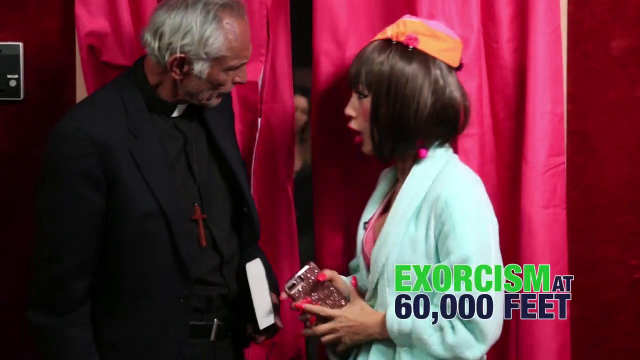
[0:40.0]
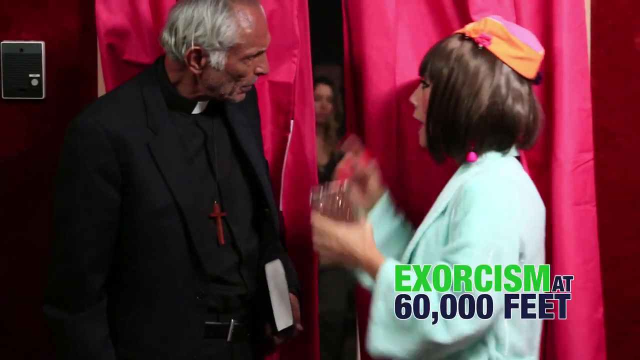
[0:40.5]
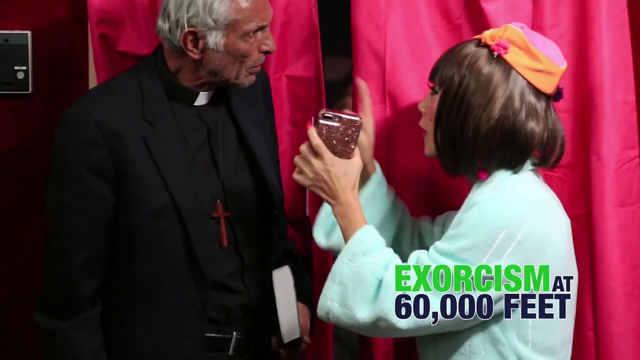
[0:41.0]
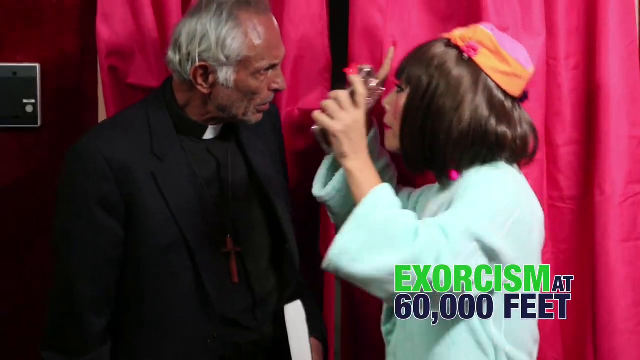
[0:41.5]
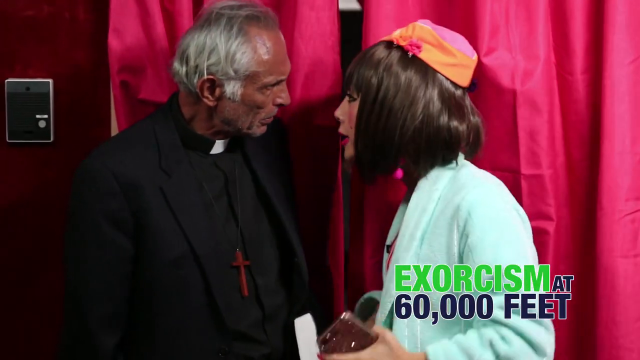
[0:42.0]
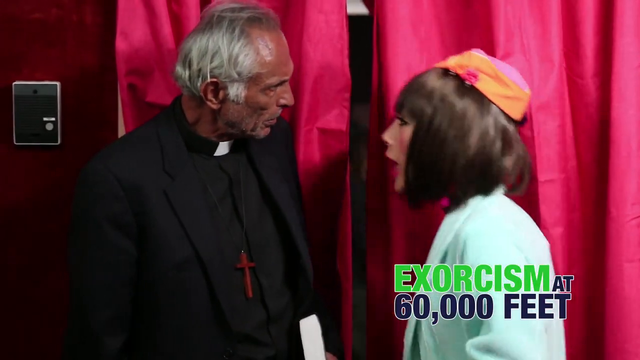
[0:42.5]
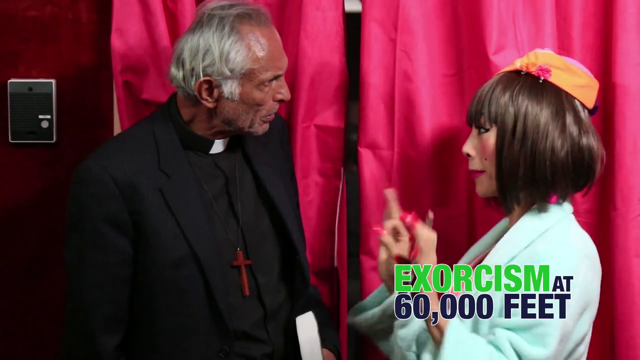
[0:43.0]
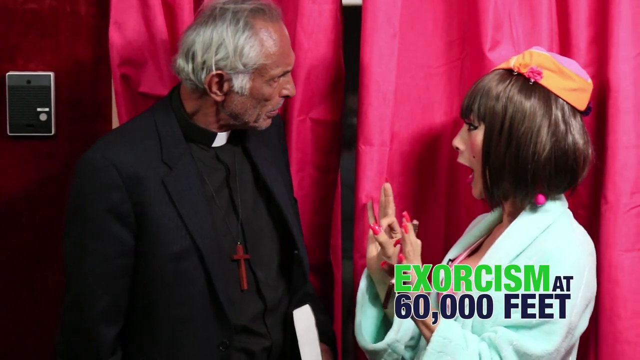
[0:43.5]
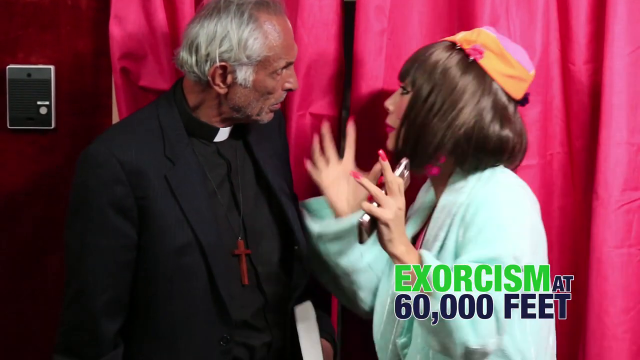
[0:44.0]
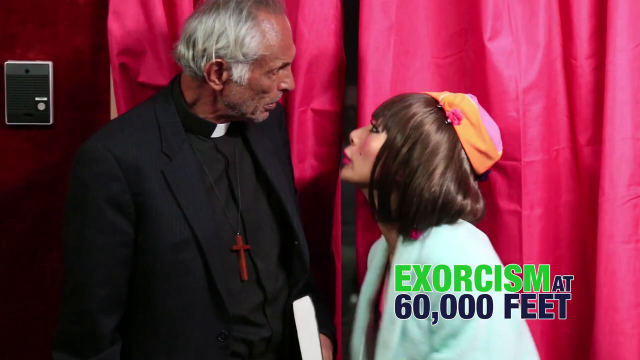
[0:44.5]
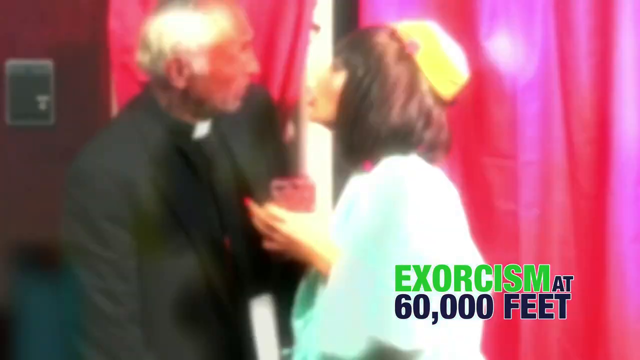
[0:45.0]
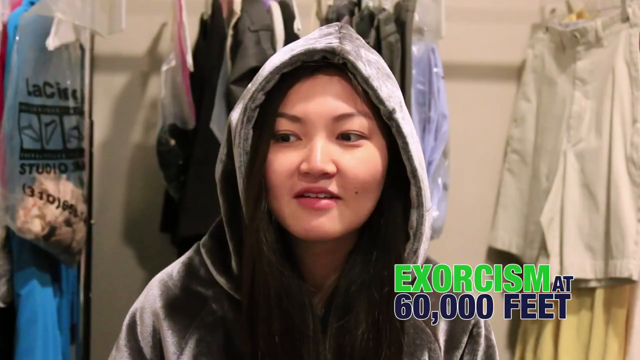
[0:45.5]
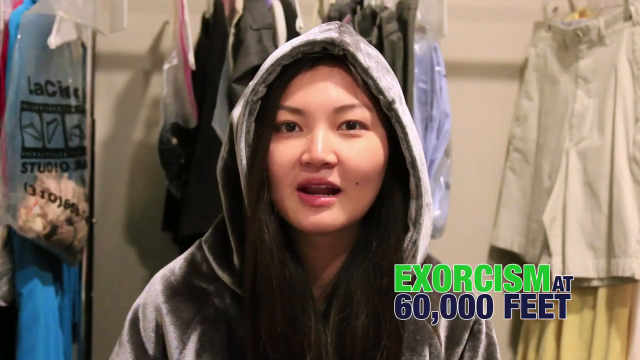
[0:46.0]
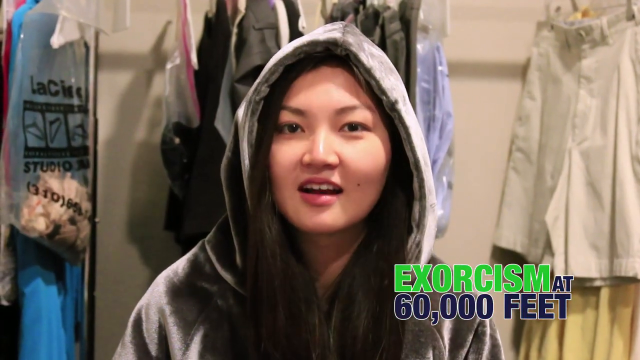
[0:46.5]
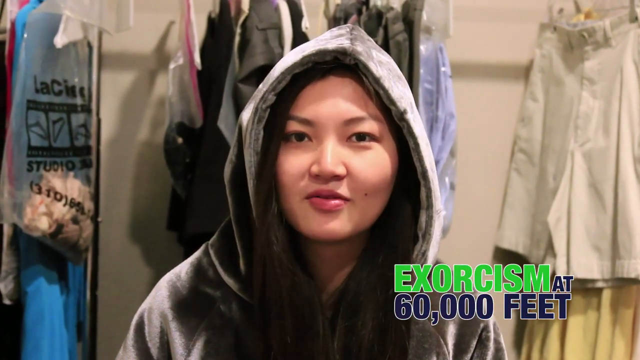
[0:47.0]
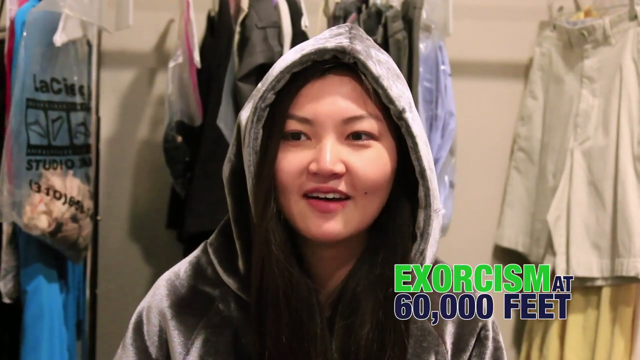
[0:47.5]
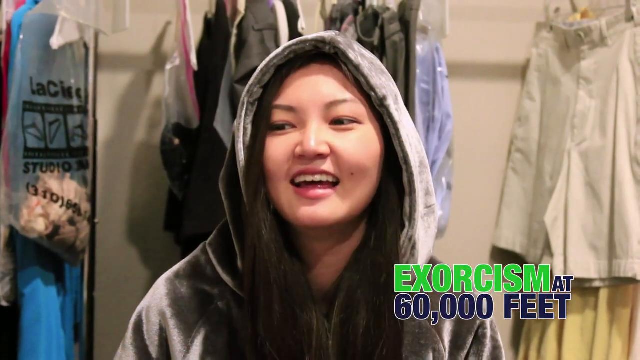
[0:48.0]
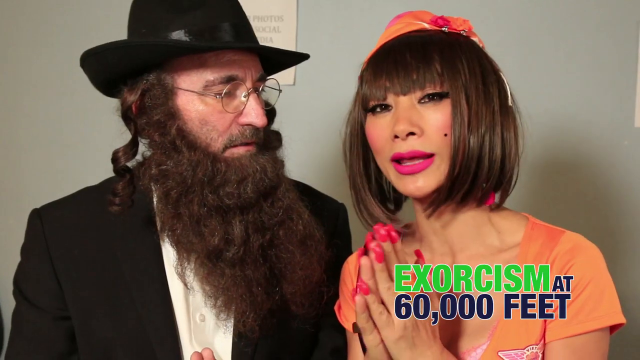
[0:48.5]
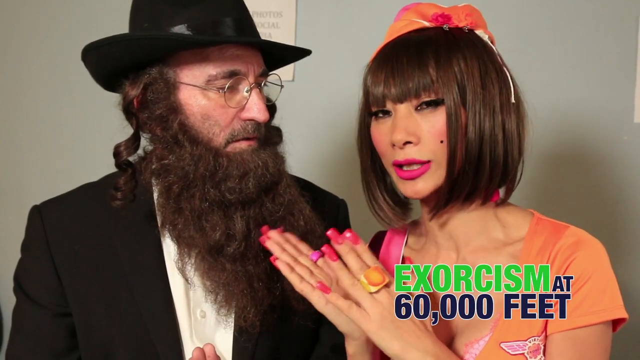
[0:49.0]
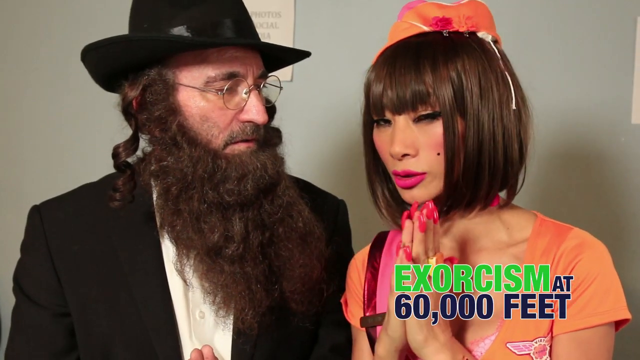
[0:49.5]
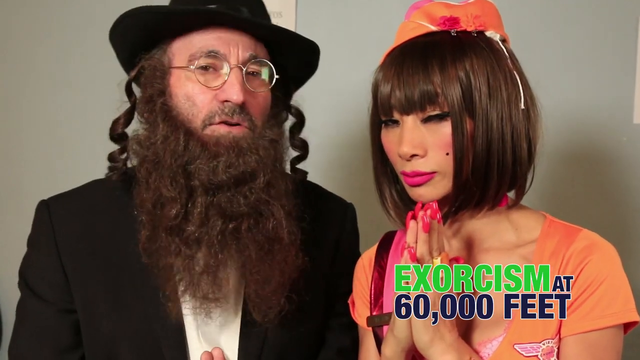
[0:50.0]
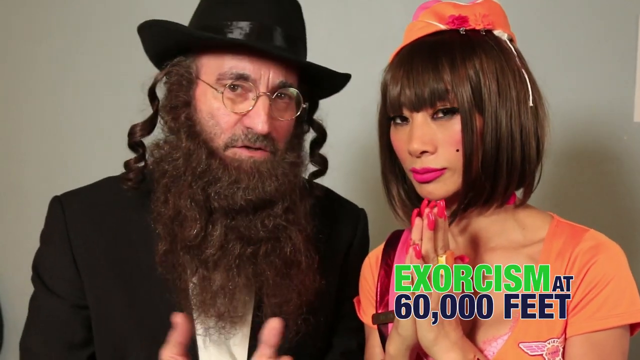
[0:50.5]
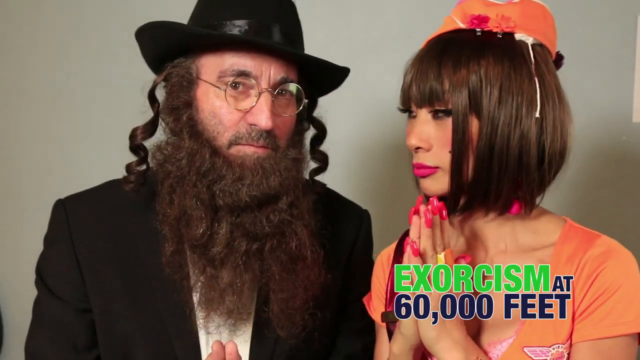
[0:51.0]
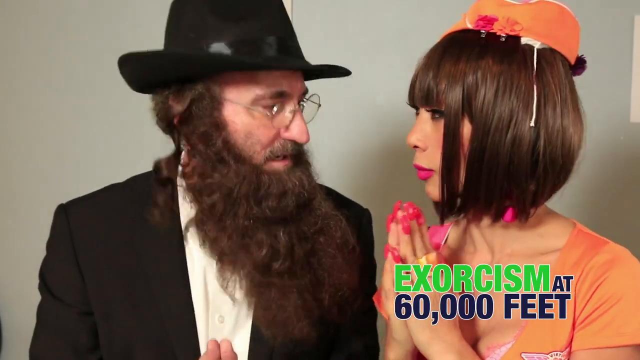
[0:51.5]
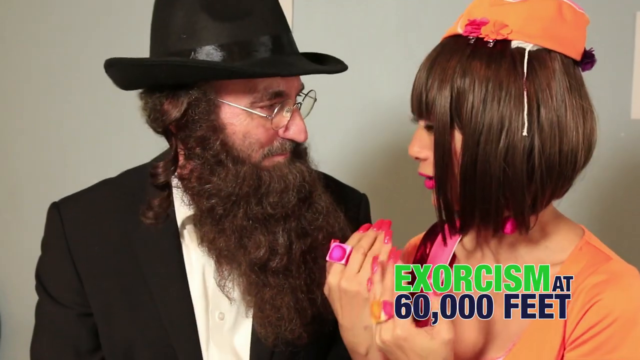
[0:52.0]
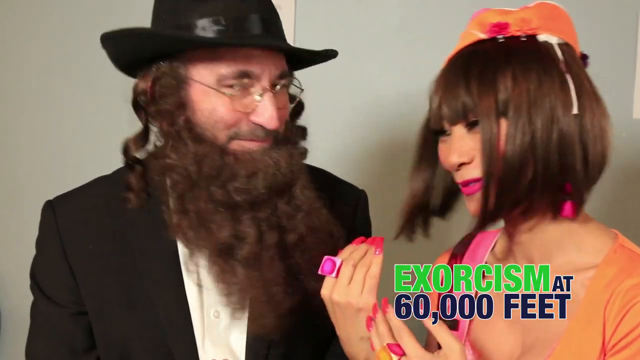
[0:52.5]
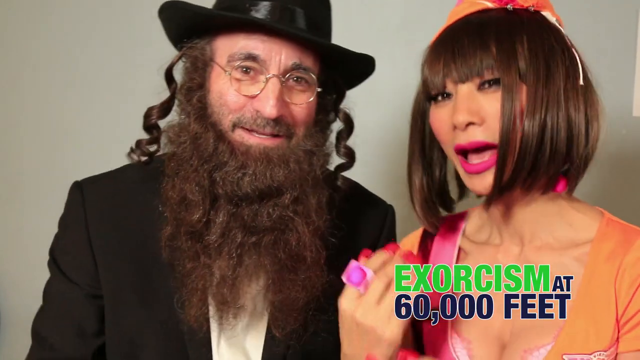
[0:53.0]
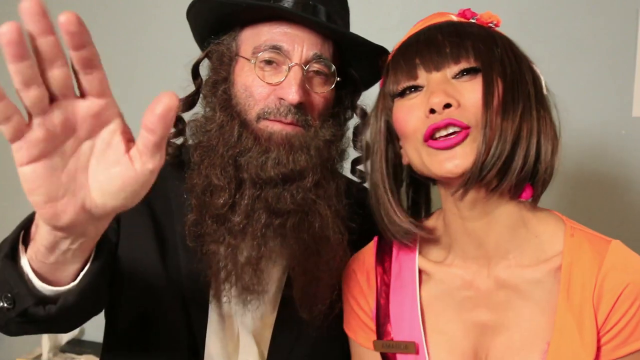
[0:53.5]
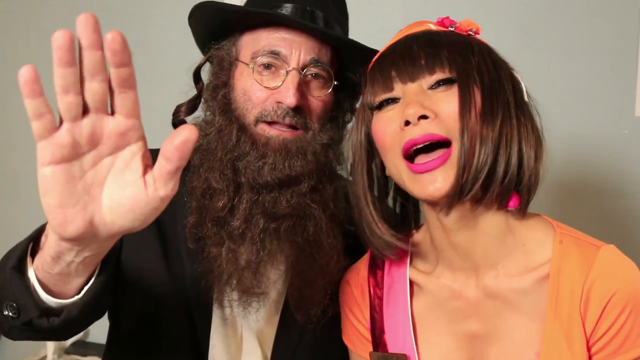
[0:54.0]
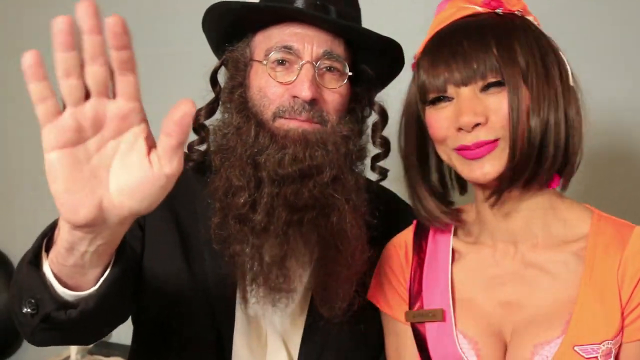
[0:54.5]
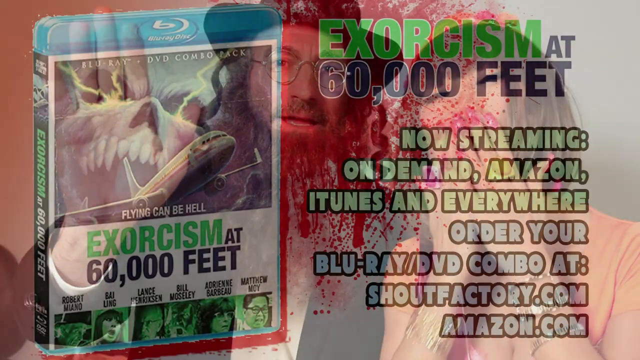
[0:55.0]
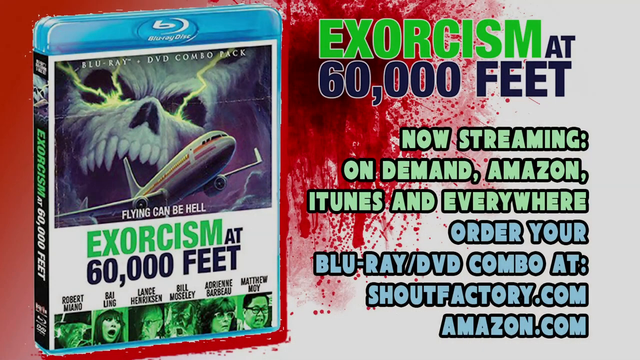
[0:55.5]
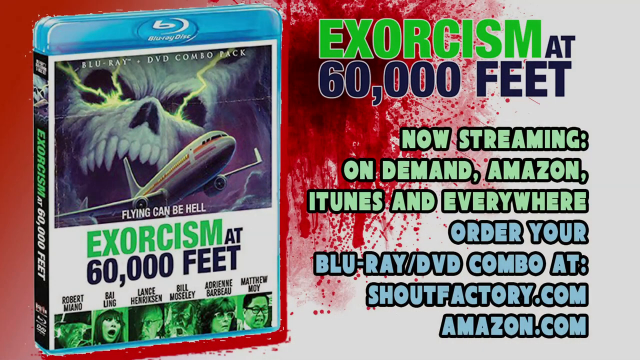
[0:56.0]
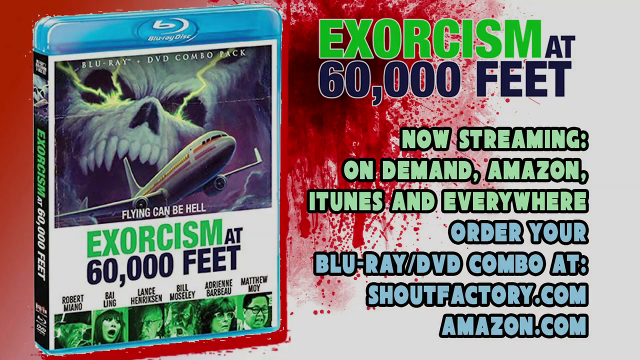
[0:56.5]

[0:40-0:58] Another clip from the show shows Amanda the stewardess on the right, now wearing a white coat over her stewardess uniform, and the priest on the left, his head bent down, looking at her and listening. She holds a cell phone in her left hand. With her right hand she points at him and points above, then extends both hands out toward him, up toward his head. She stands up on her tiptoes to reach his height and speaks to him, then lowers back down onto the flats of her feet. Her right hand makes the okay symbol as she speaks. Next, the woman who plays her speaks for the cameras, dressed normally in a hoodie. She is then seen dressed as Amanda, and to her right is a man dressed as either an Amish person or an Orthodox Jew, hard to tell which. He has a very long beard and curls of hair coming off the sides of his head, and he waves at the camera with his right hand.